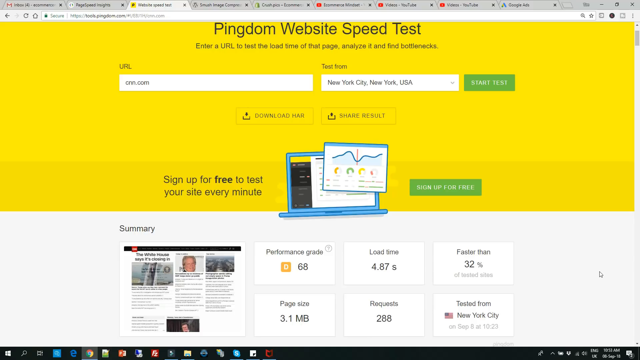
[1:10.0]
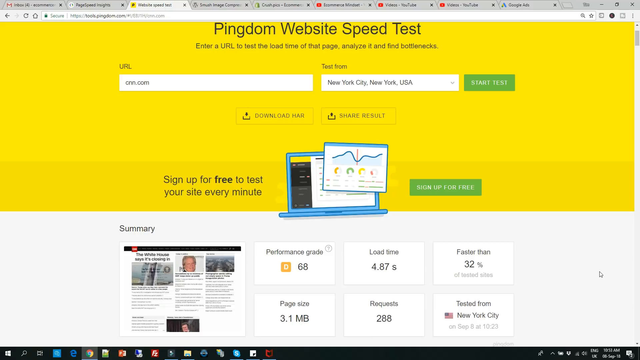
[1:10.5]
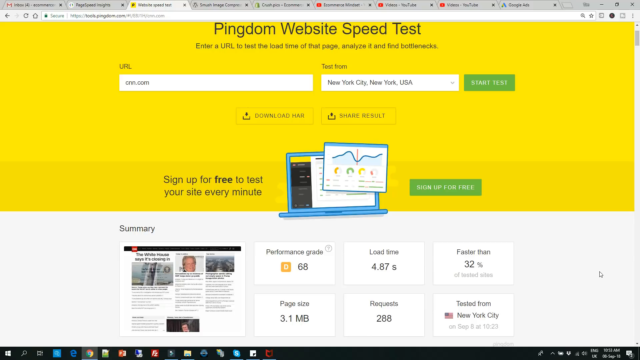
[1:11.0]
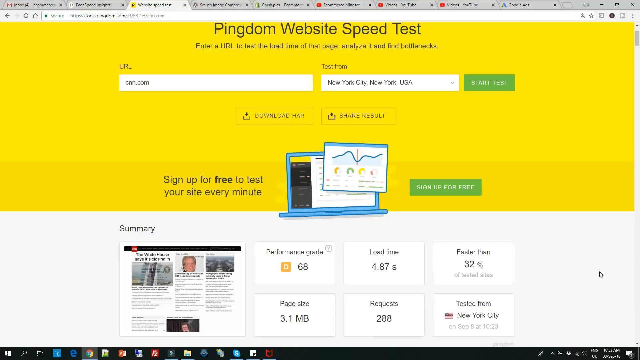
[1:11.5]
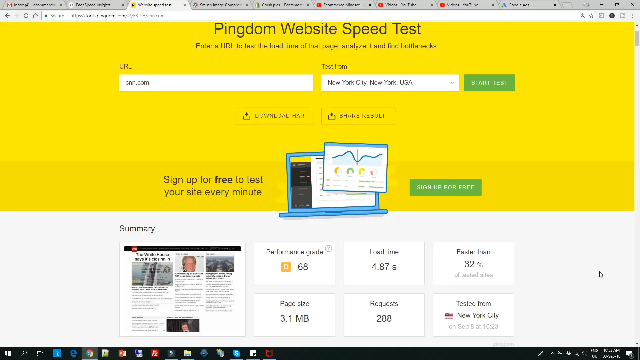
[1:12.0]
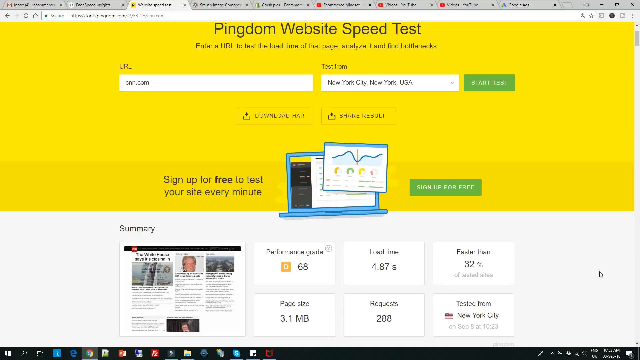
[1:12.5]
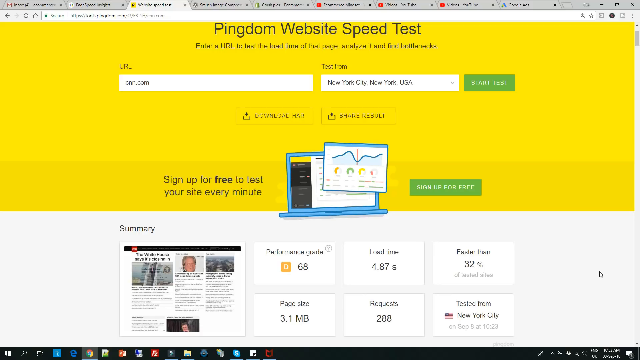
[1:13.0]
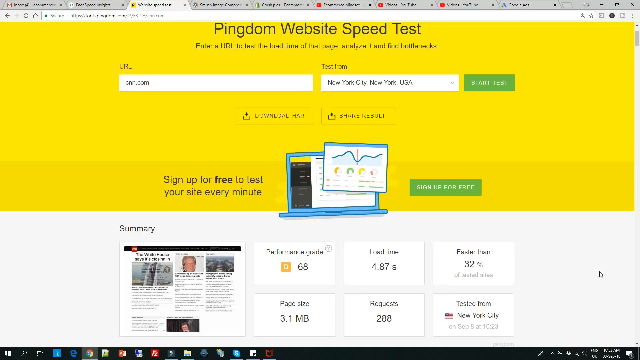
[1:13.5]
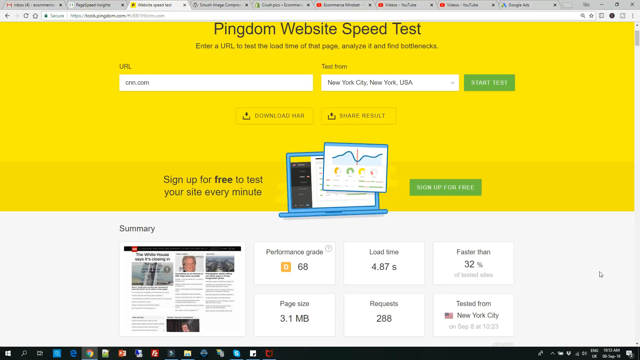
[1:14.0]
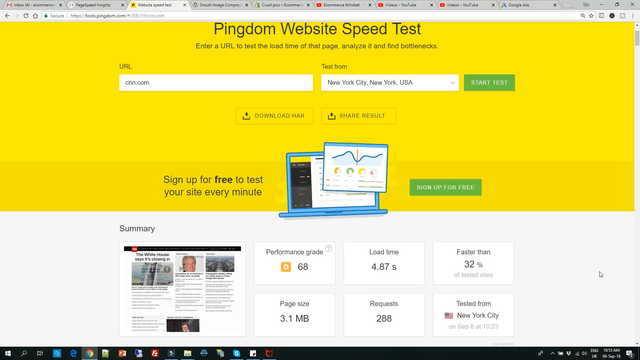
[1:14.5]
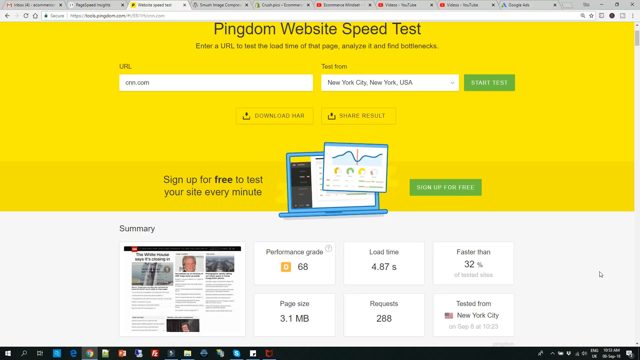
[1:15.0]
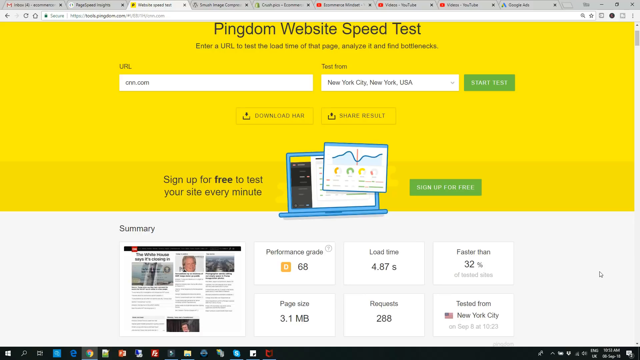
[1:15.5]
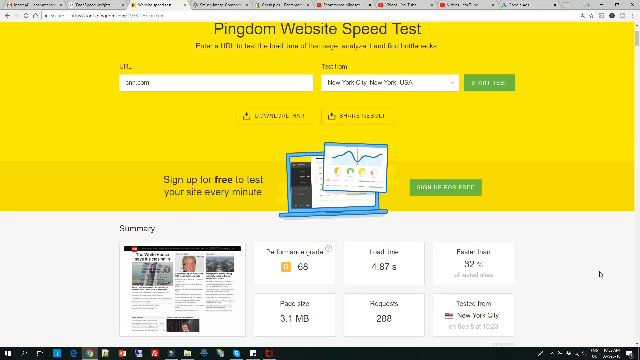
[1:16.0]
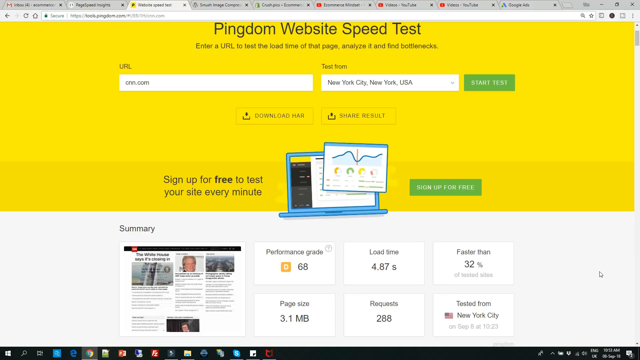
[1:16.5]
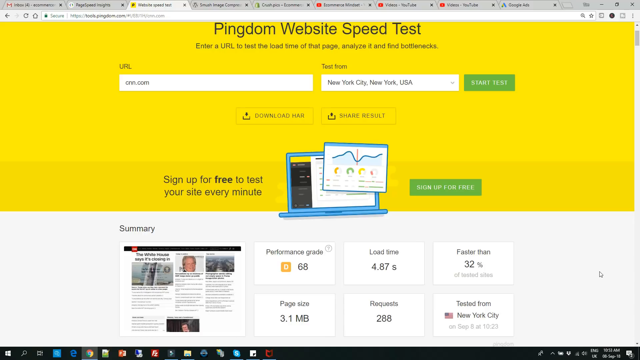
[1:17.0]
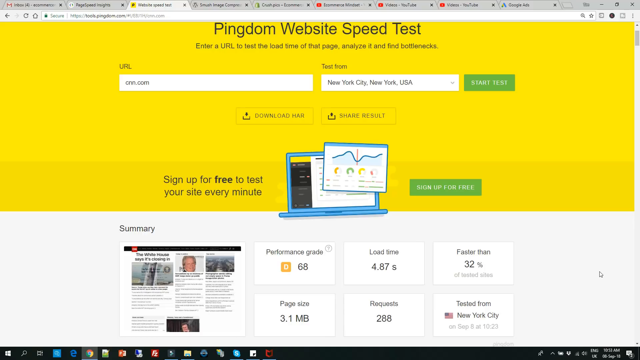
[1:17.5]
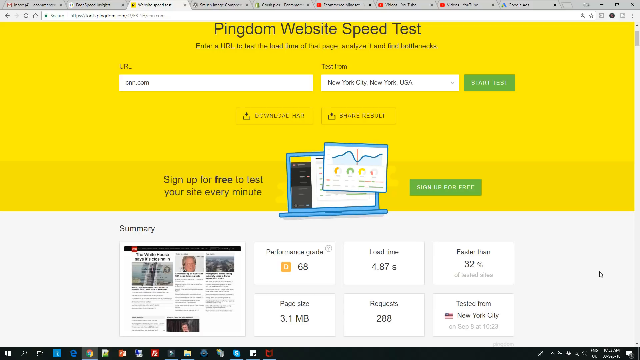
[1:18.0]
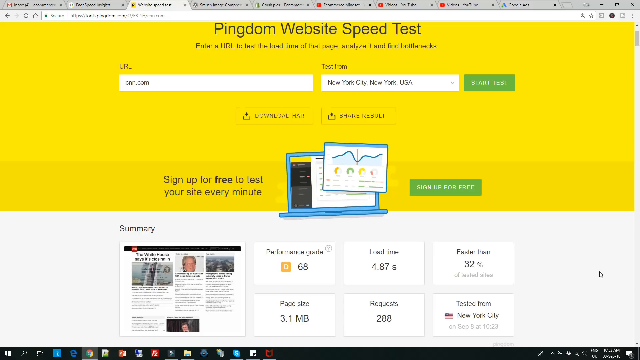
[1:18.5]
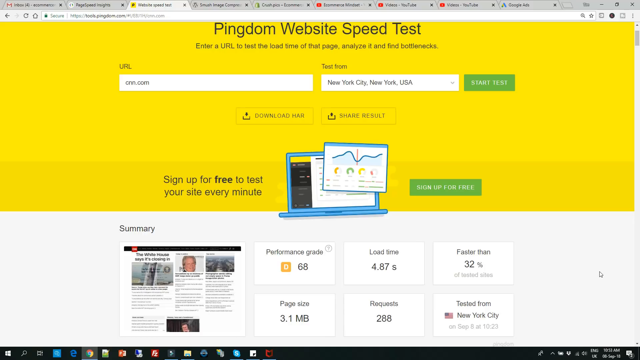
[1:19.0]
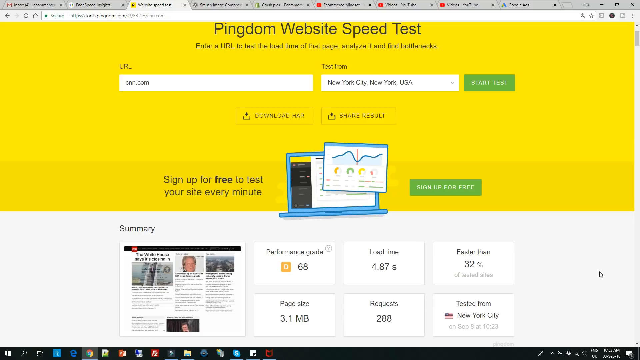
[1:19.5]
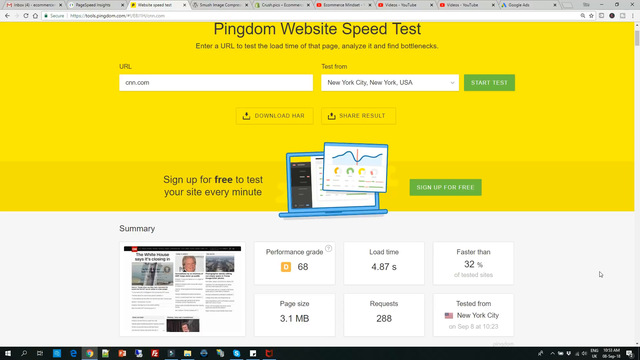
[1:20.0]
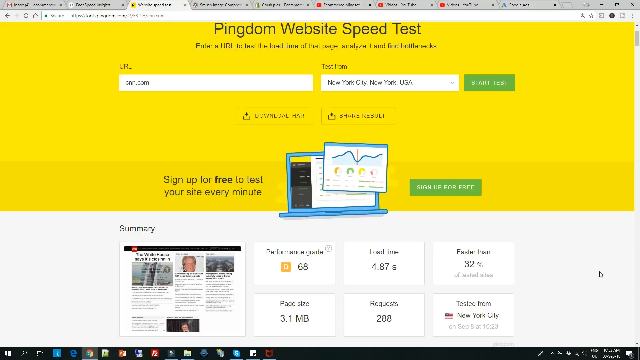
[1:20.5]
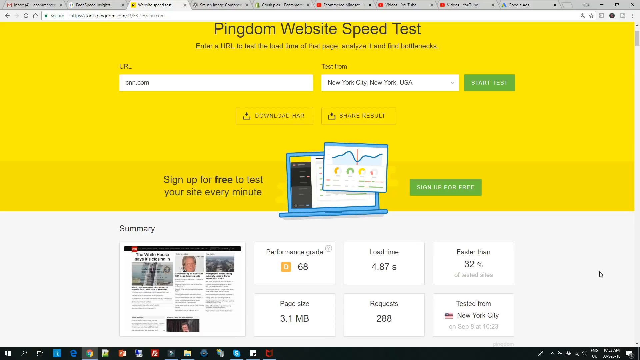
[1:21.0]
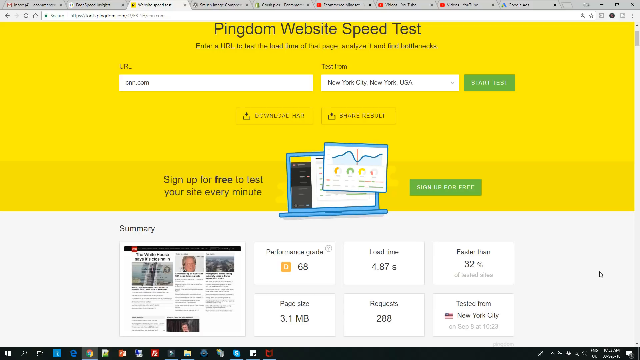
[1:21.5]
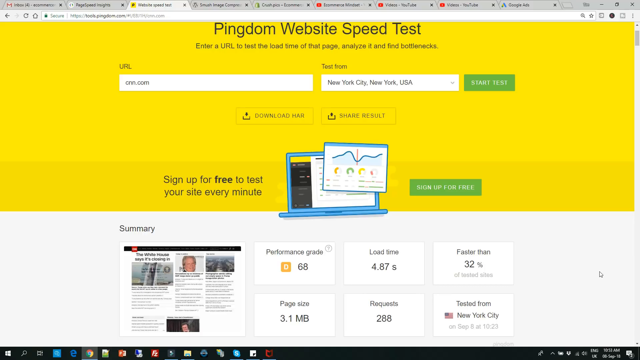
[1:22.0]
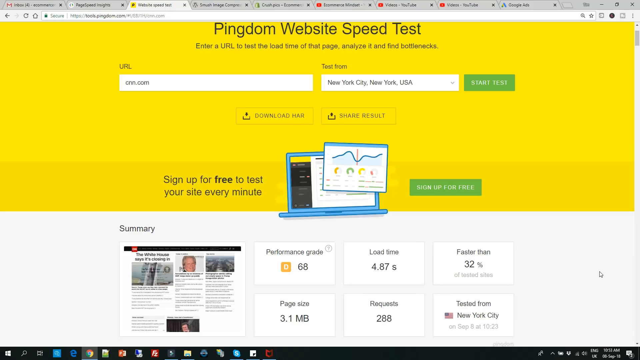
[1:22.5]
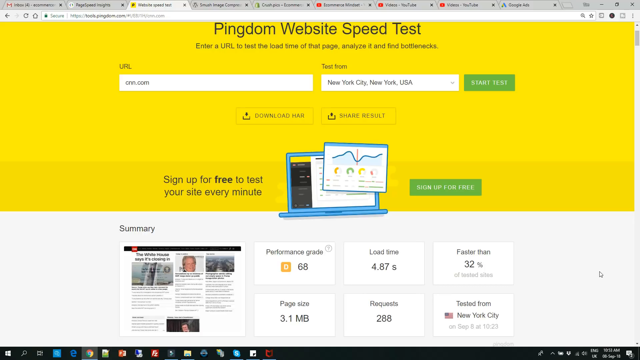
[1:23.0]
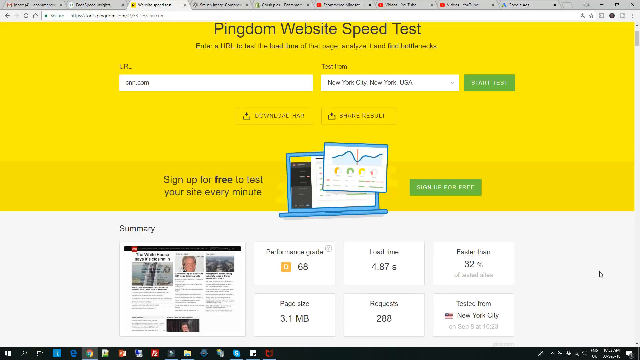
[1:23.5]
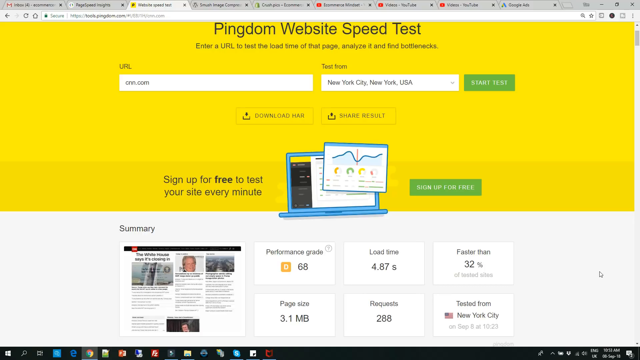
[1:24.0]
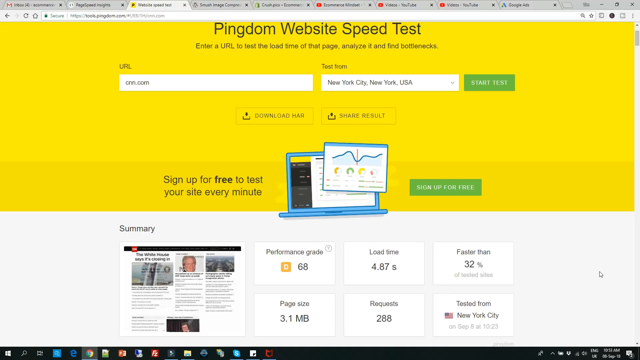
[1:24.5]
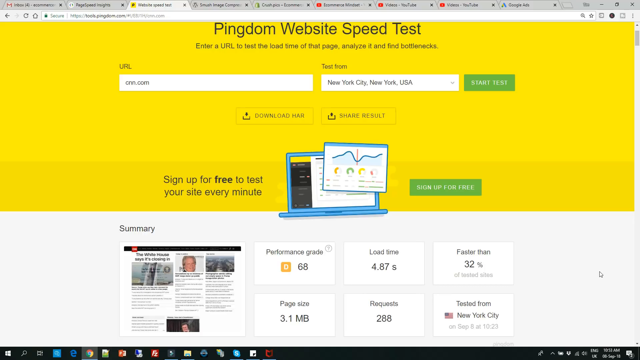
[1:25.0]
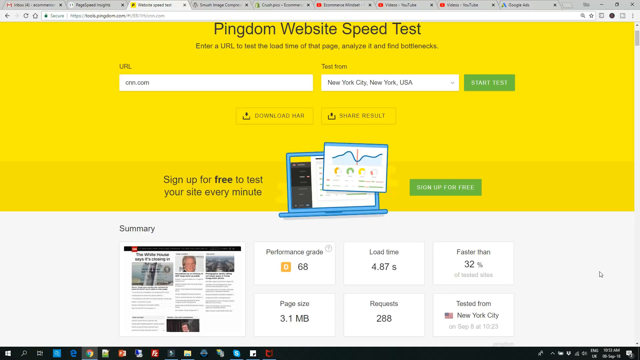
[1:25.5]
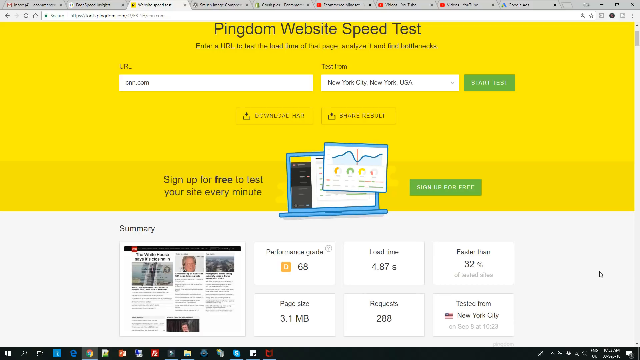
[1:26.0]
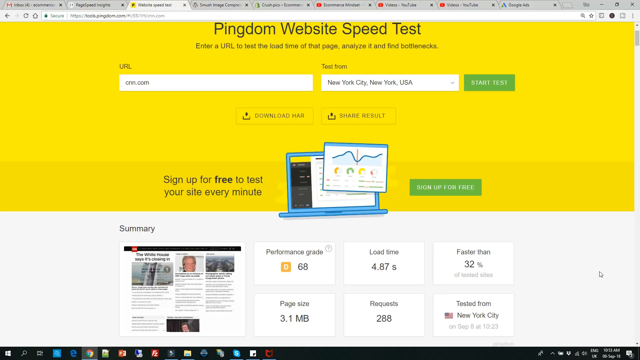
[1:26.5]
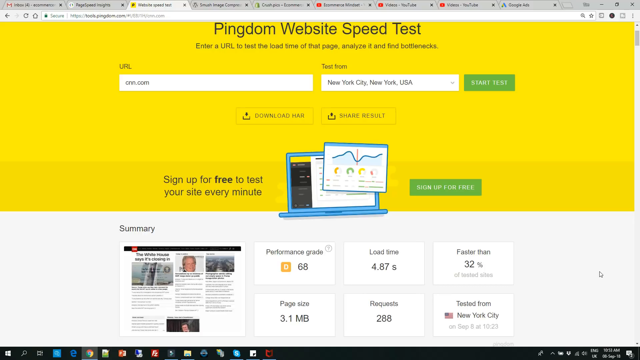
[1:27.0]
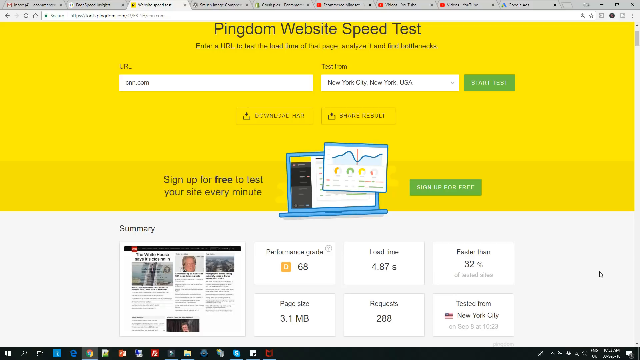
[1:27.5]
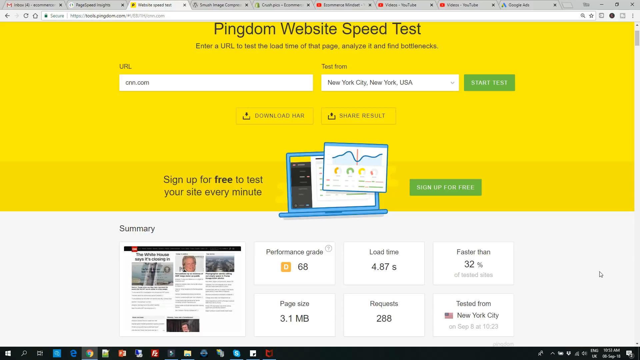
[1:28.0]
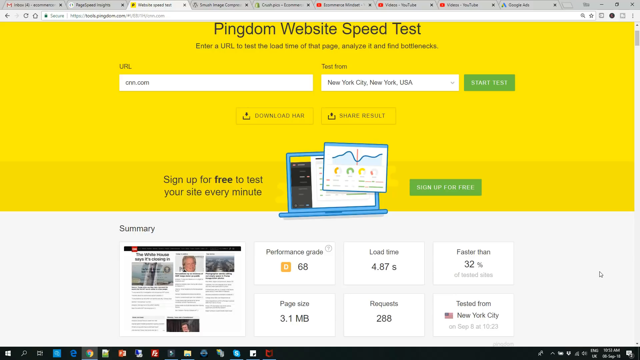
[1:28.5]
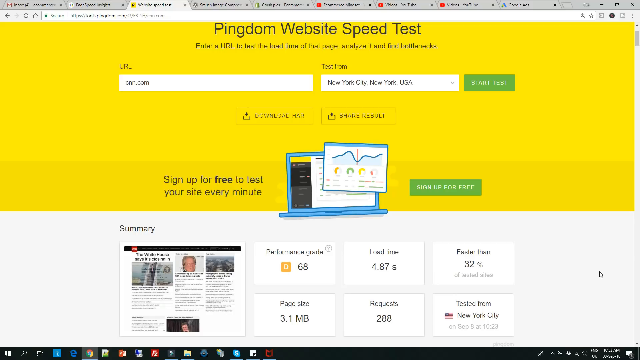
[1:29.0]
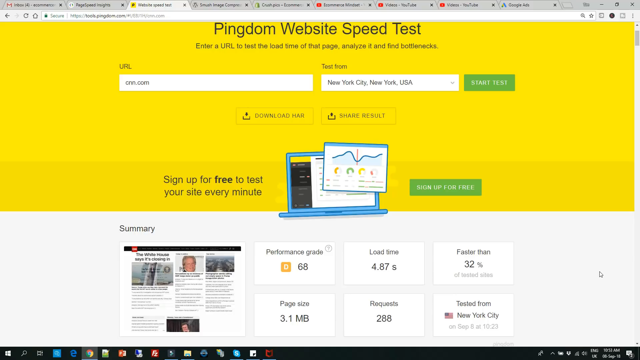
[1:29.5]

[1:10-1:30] Multiple tabs, about nine, are open on the desktop. The Pingdom page reads "Pingdom website speed test", "Enter a URL to test the load time of that page" and "Analyze it and find bottlenecks". The URL is cnn.com, tested from "New York City, New York, United States". The summary shows a performance grade of 68 and that the site was faster than 32% of tested sites. The page also offers an option to sign up for free to test a site every minute. The screen stays on this page the whole time.